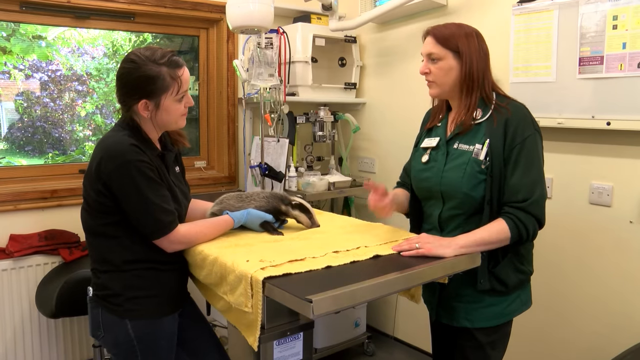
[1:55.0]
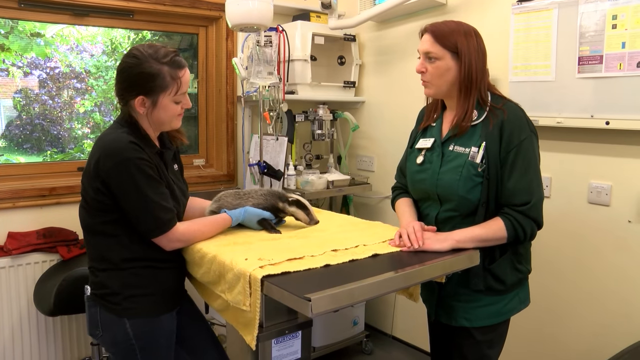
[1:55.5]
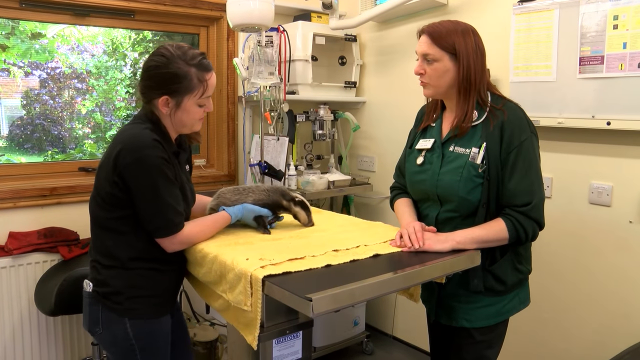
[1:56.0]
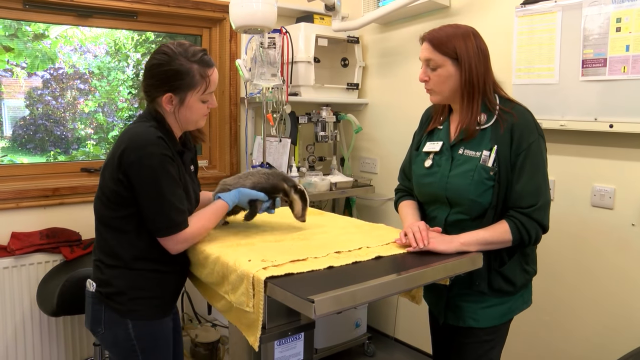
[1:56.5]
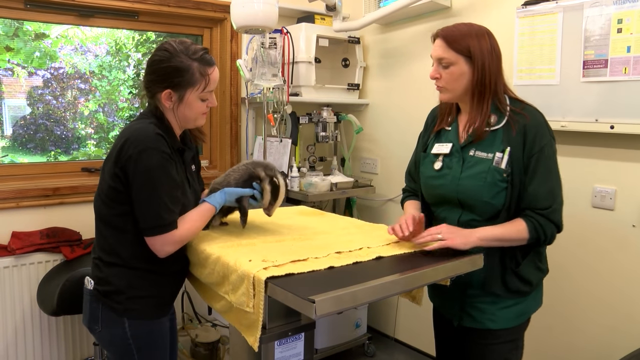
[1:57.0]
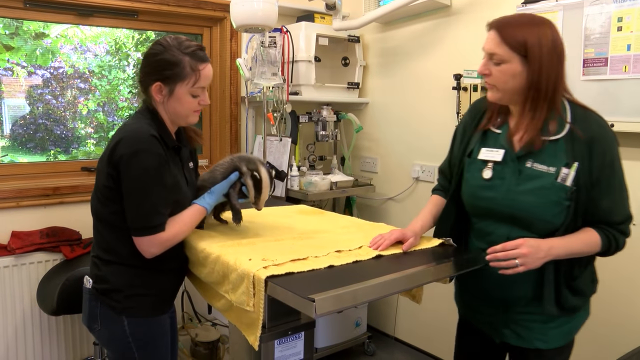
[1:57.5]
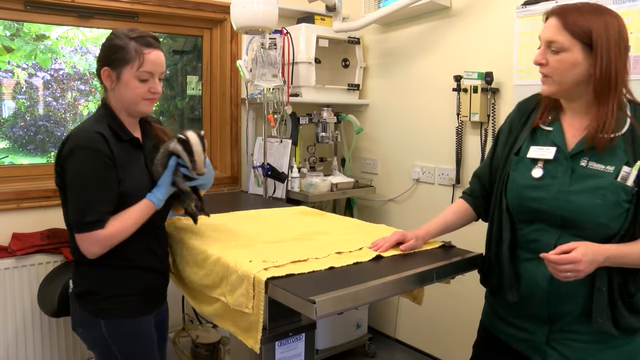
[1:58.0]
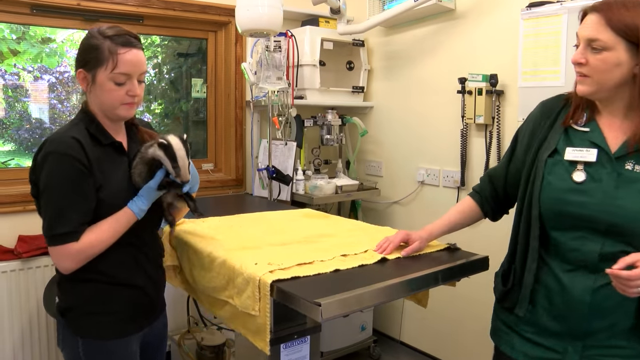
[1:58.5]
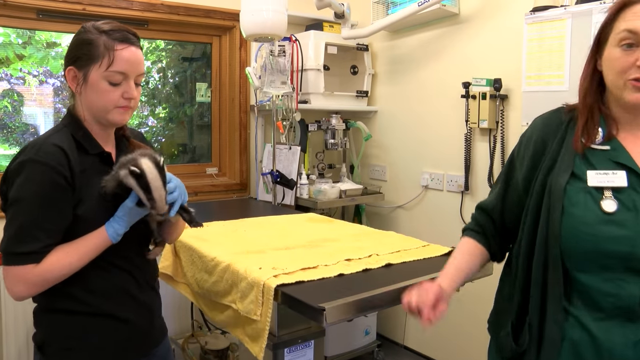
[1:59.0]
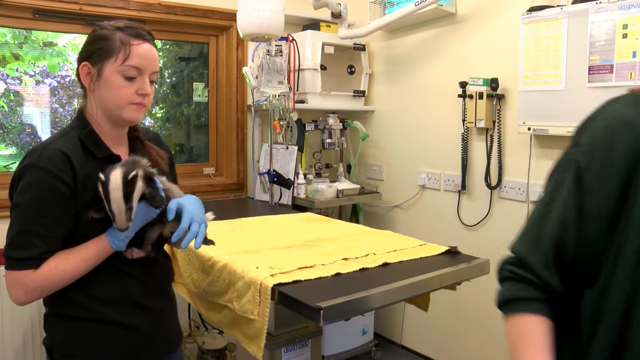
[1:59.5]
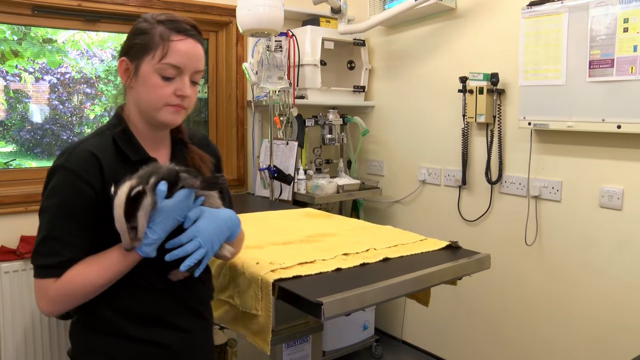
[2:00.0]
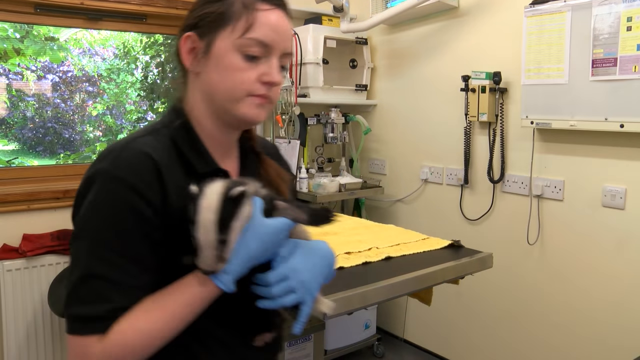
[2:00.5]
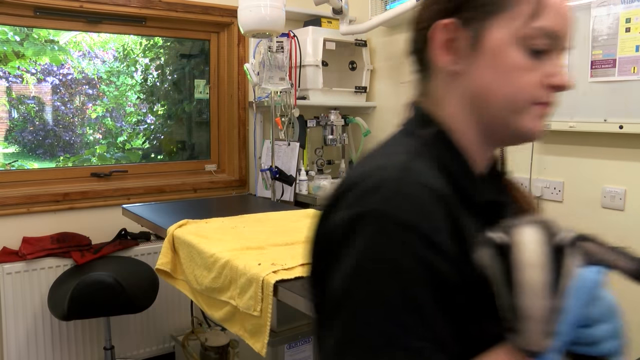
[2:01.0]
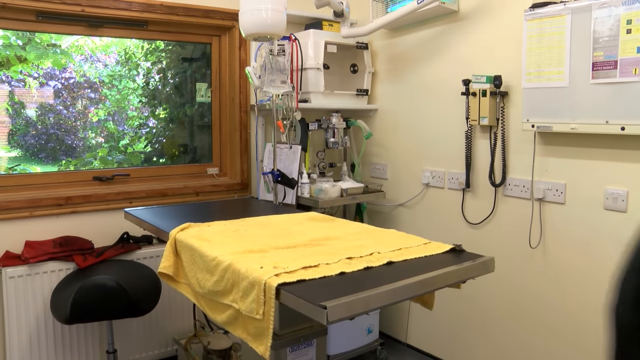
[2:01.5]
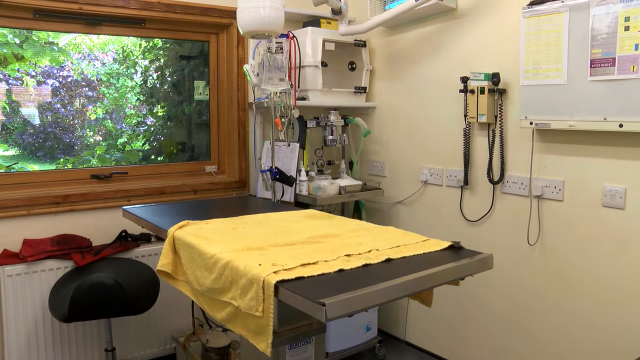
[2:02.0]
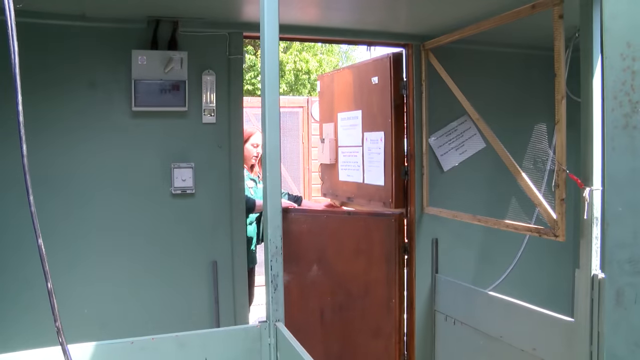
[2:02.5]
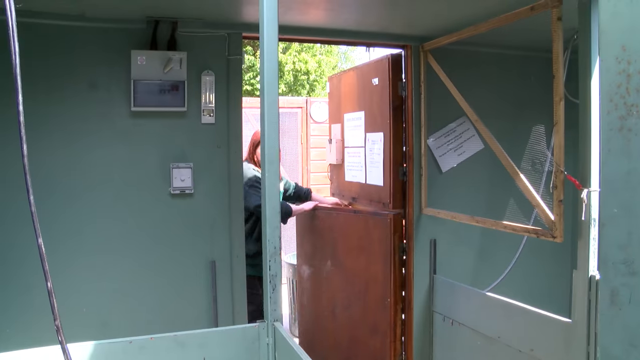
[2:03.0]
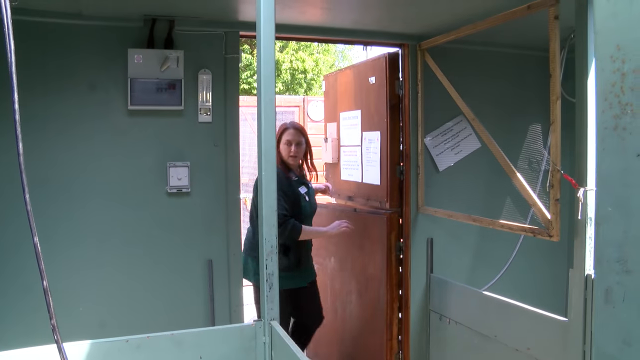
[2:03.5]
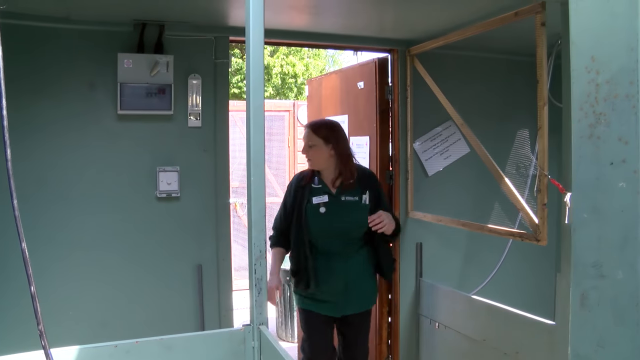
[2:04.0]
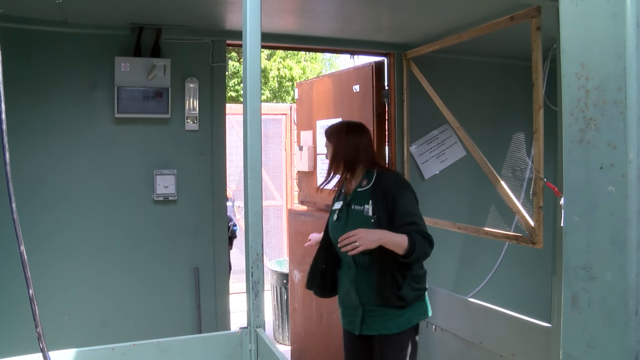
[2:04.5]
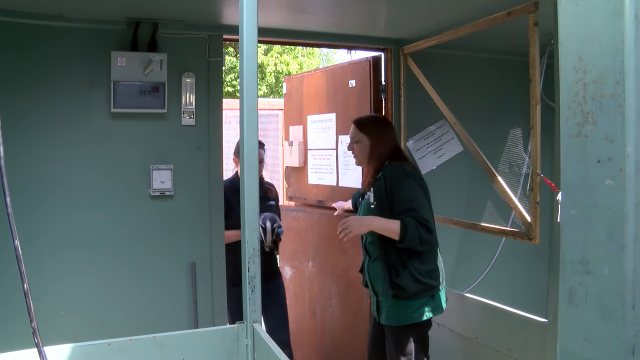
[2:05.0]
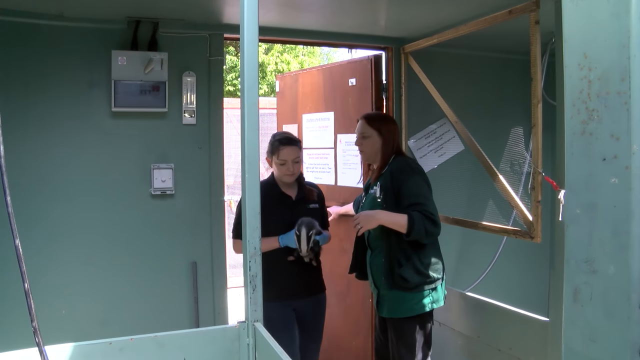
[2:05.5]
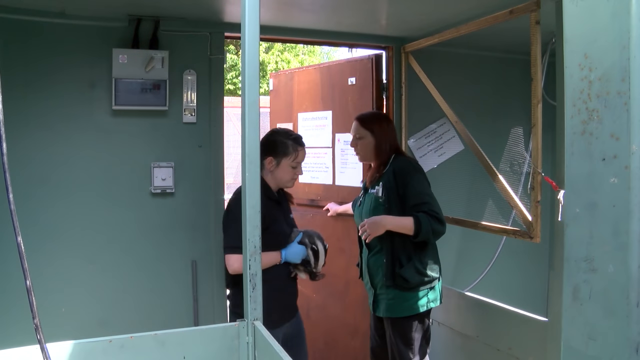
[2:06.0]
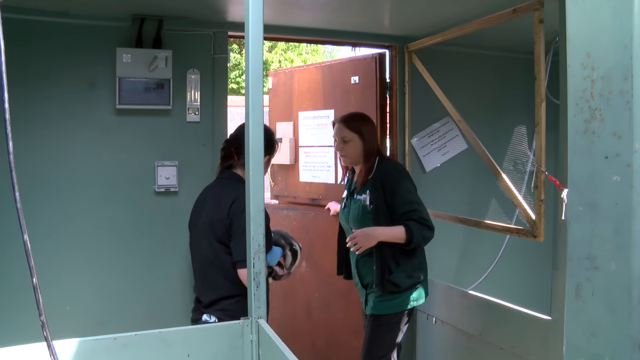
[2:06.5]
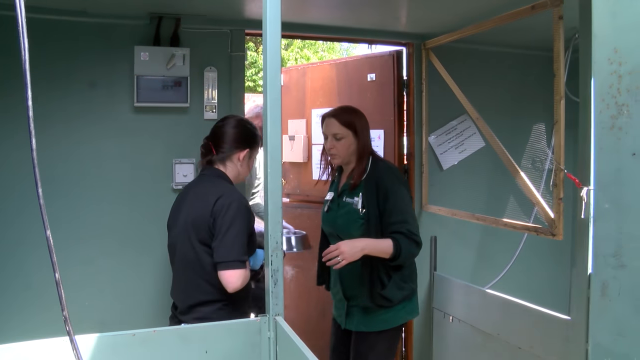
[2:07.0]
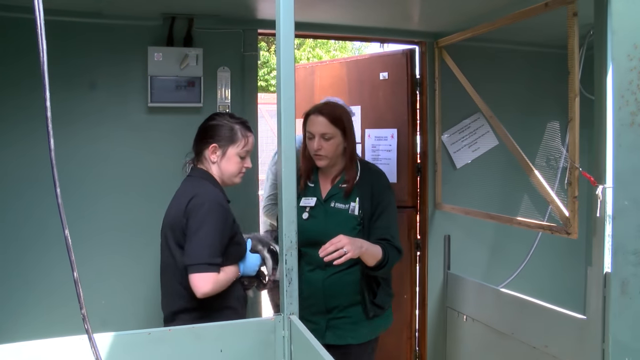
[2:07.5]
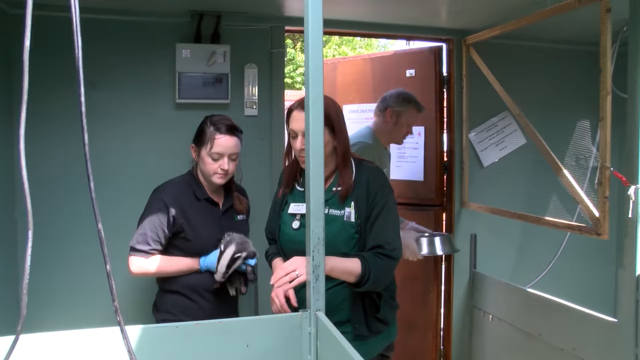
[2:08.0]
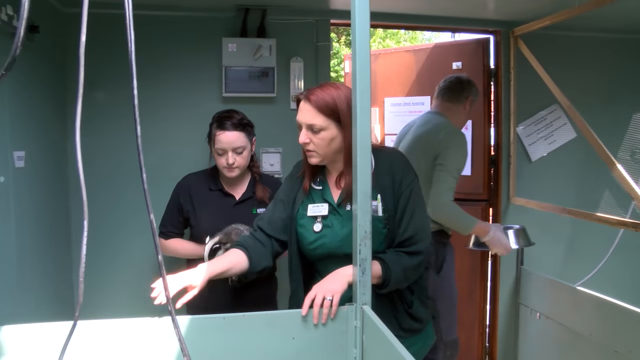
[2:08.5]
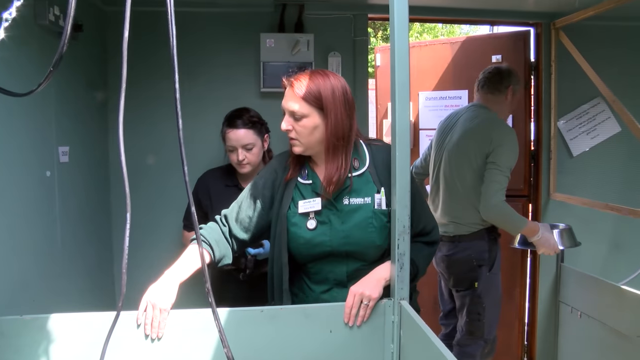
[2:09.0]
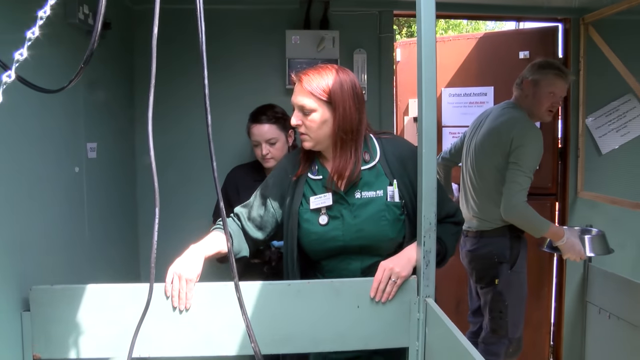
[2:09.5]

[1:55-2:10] A wider view shows the two women at the table and more of the office: the board, more medical equipment behind their table, a little cage or kennel, and a big pane window looking outside. The window frame is wooden and brown, and outside there are a lot of trees and it is sunny. The women talk, then pick up the badger and walk into another space, a green room, where they put him in an area. A man opens the door and walks into the room with a silver dog bowl.